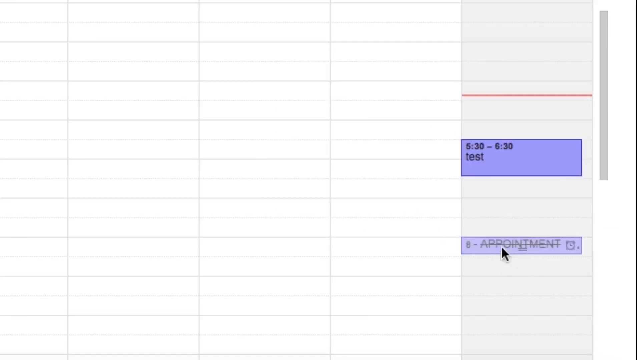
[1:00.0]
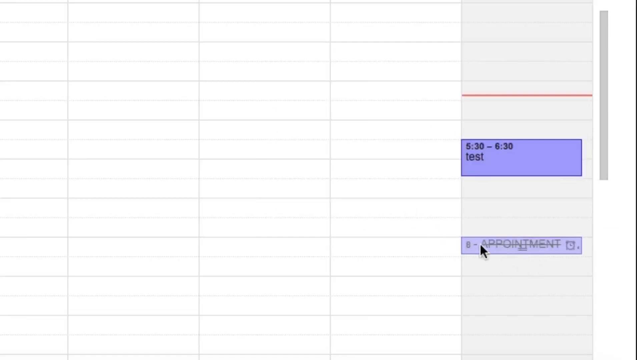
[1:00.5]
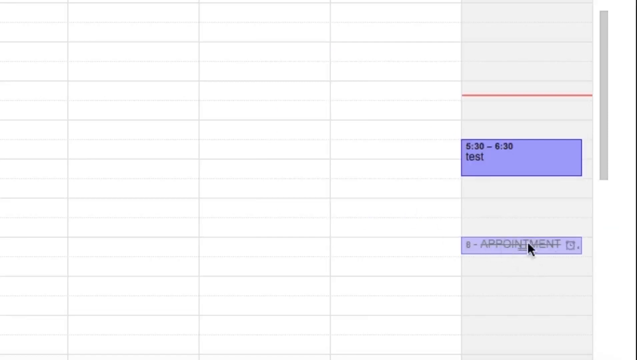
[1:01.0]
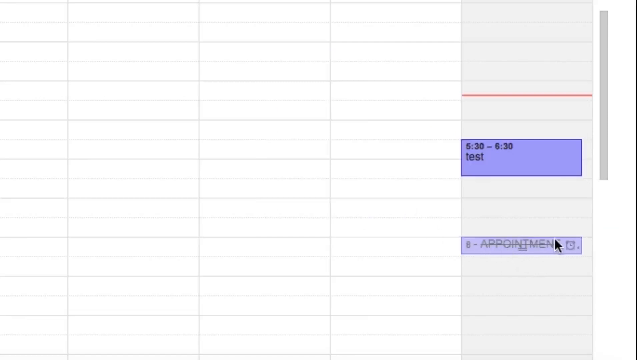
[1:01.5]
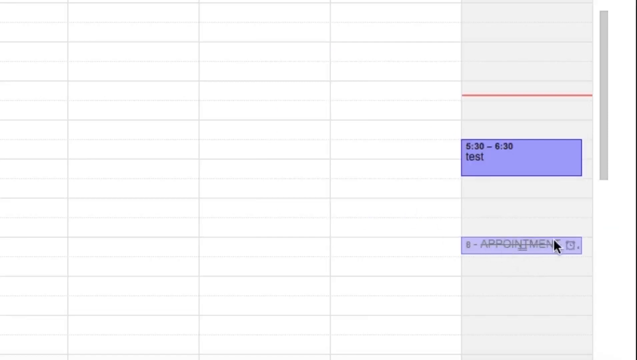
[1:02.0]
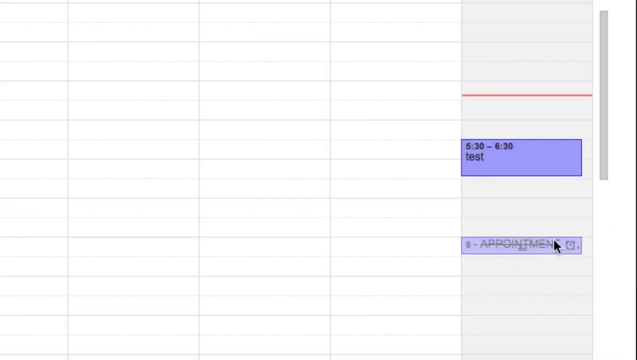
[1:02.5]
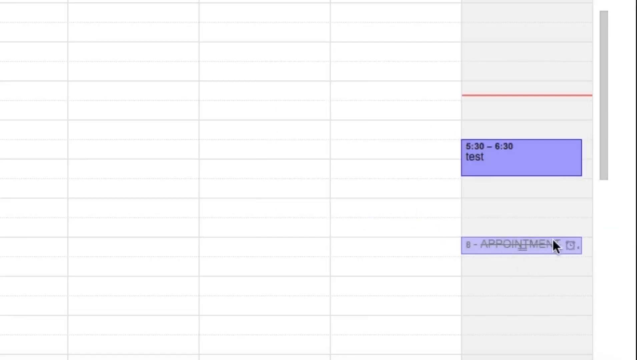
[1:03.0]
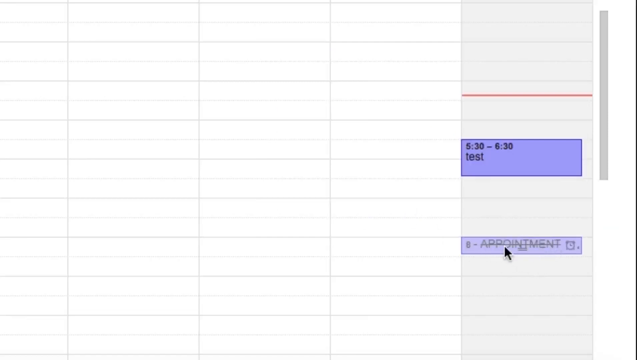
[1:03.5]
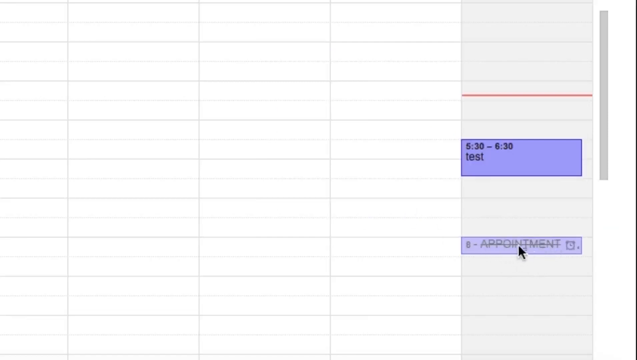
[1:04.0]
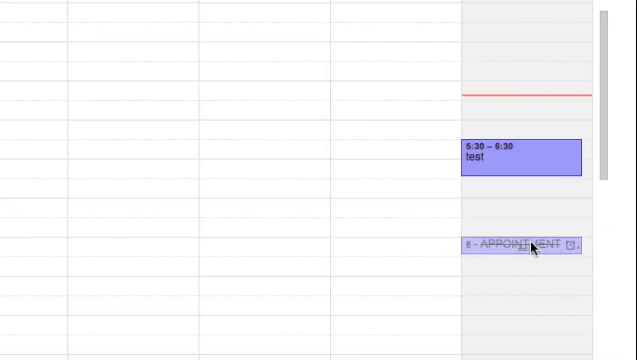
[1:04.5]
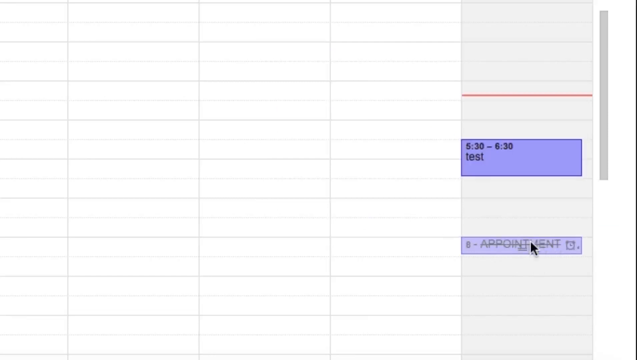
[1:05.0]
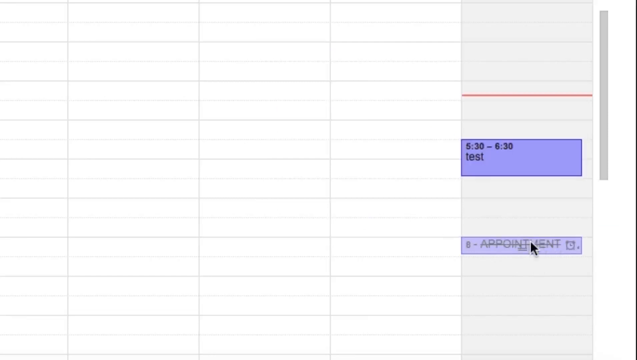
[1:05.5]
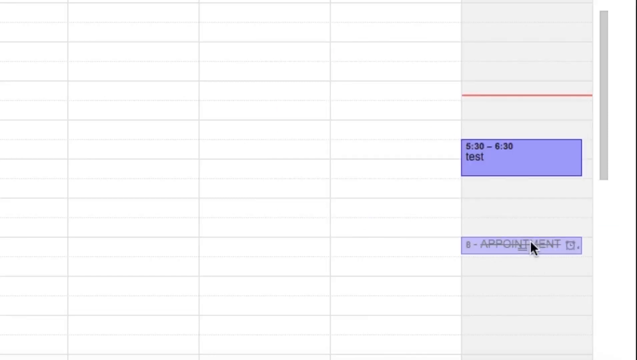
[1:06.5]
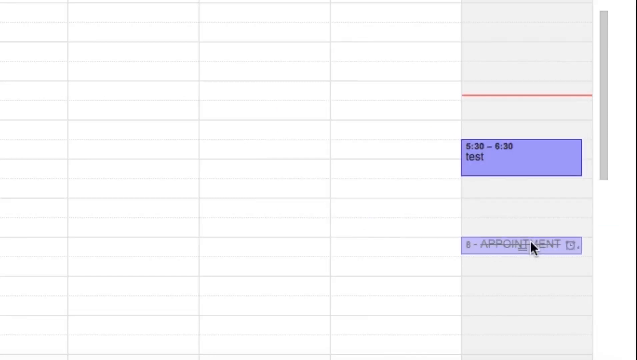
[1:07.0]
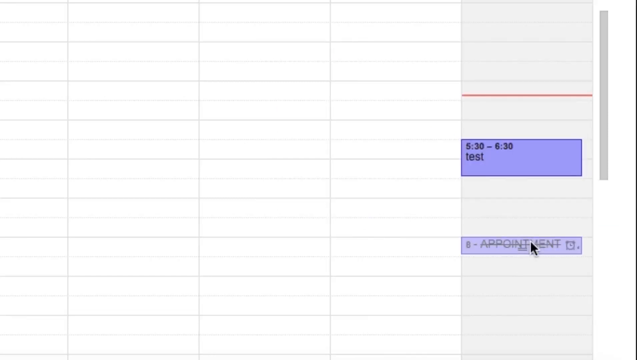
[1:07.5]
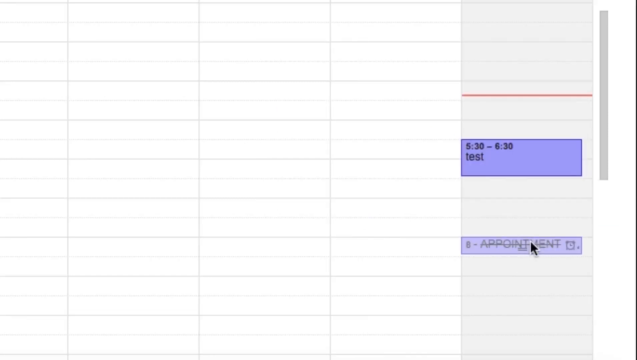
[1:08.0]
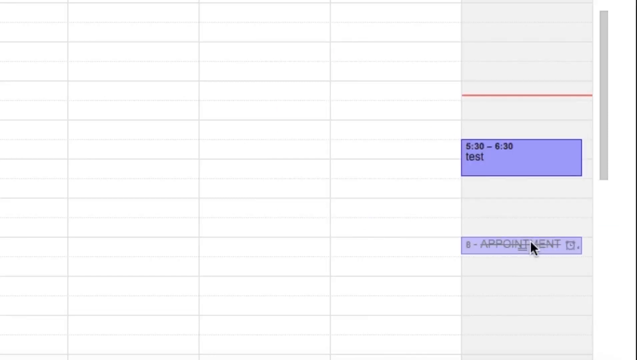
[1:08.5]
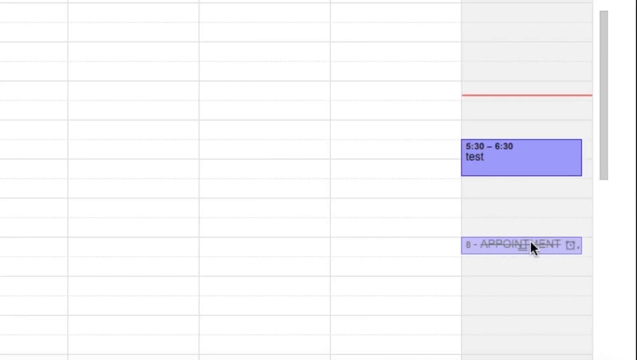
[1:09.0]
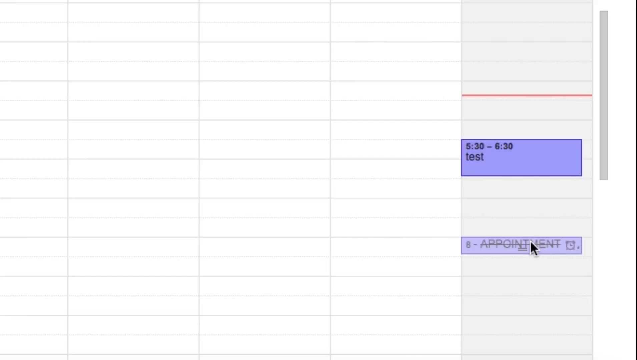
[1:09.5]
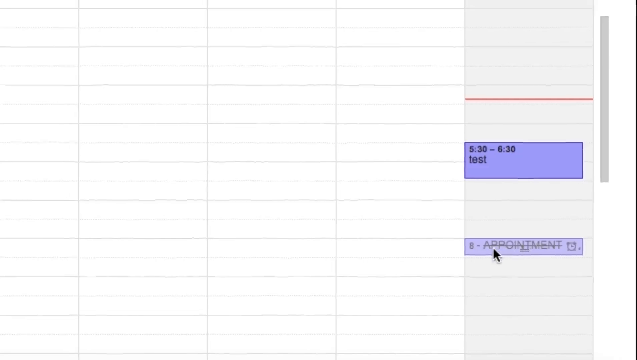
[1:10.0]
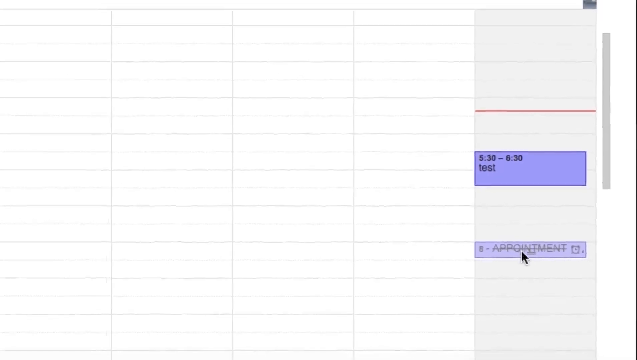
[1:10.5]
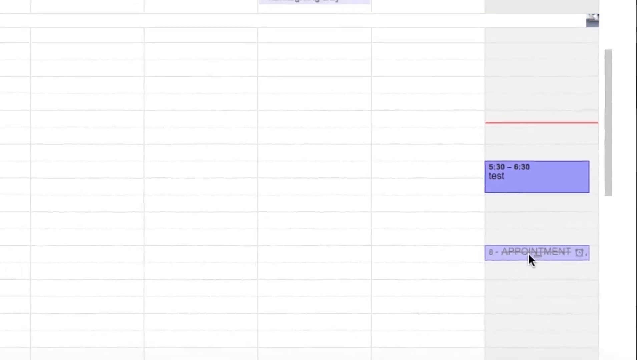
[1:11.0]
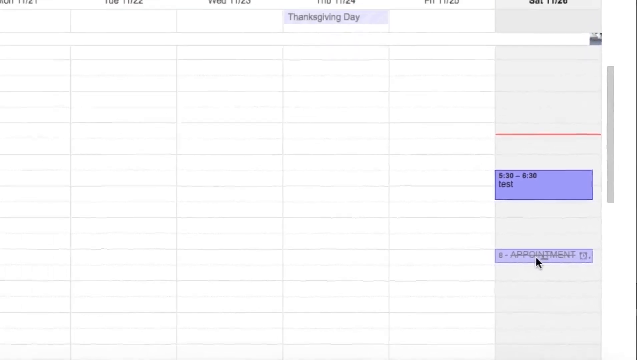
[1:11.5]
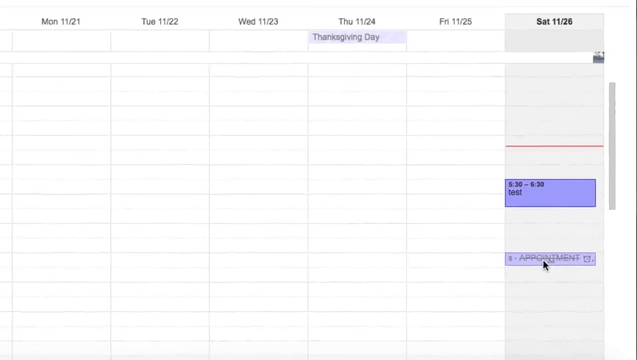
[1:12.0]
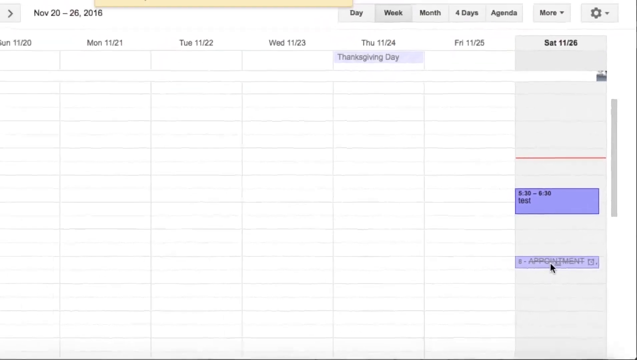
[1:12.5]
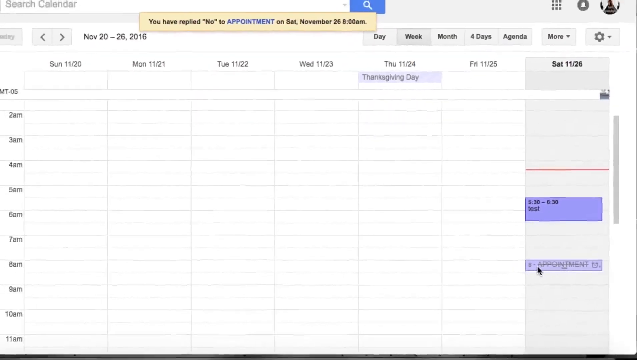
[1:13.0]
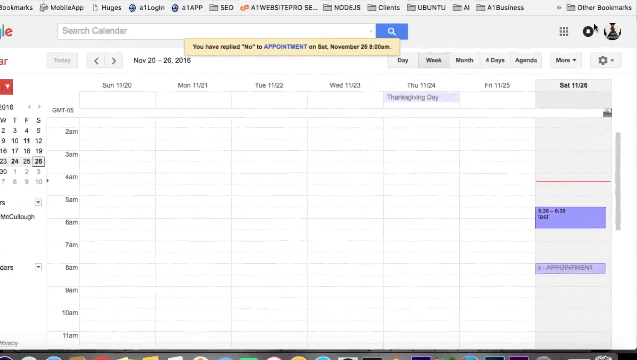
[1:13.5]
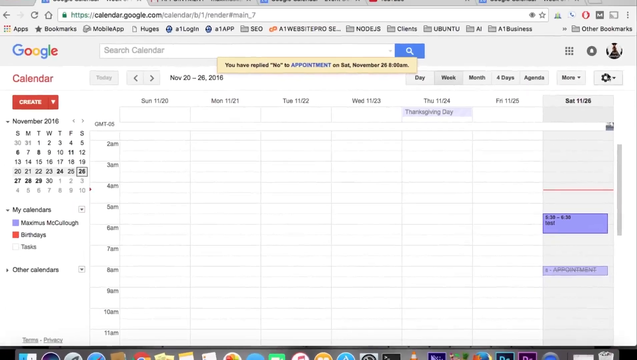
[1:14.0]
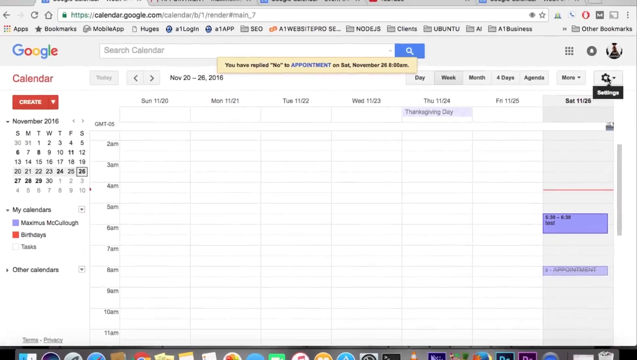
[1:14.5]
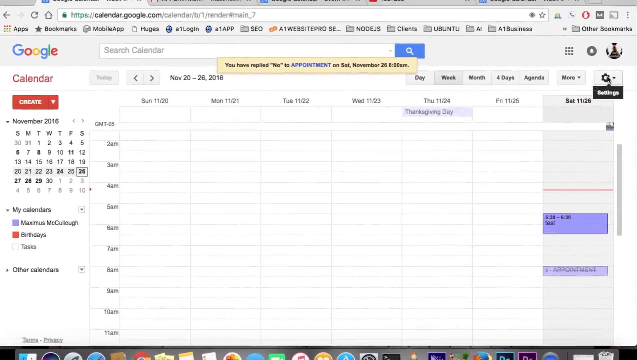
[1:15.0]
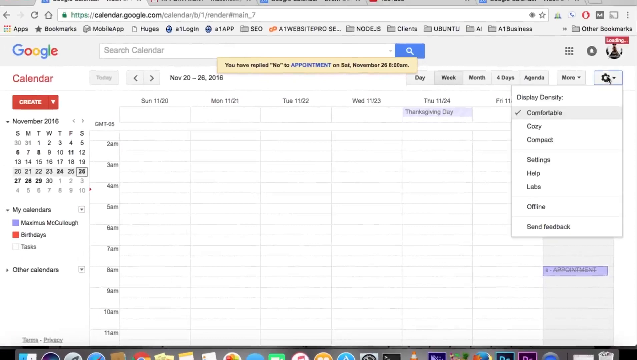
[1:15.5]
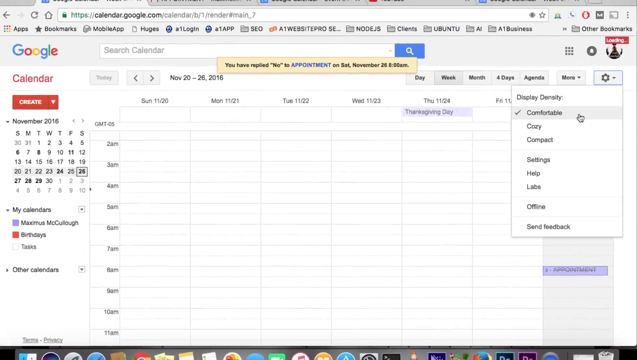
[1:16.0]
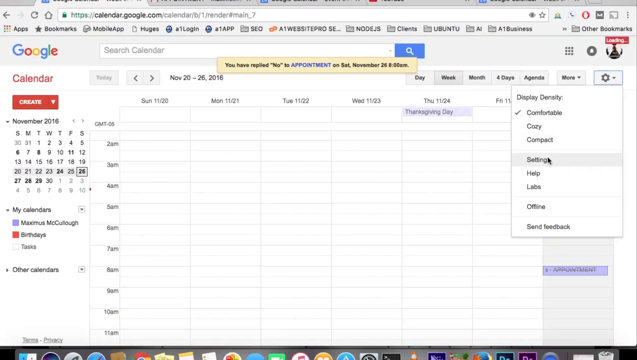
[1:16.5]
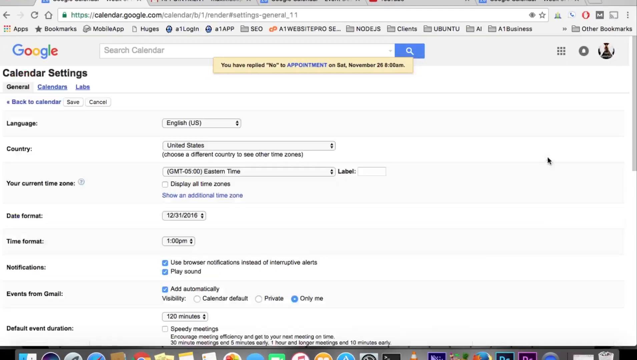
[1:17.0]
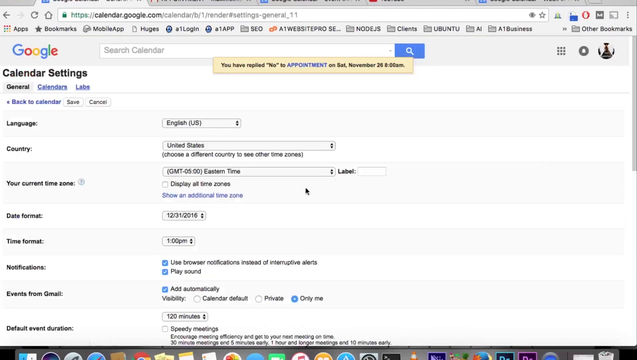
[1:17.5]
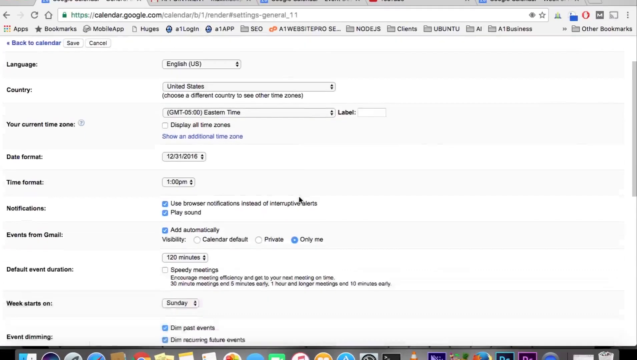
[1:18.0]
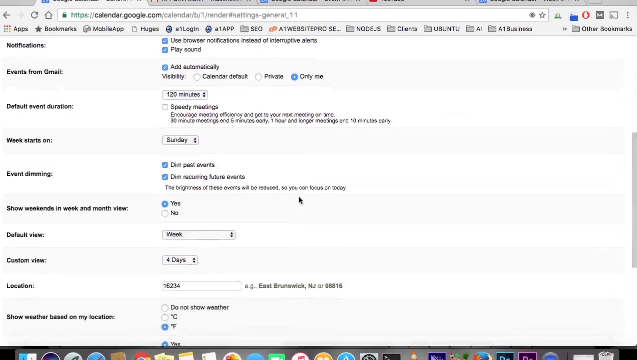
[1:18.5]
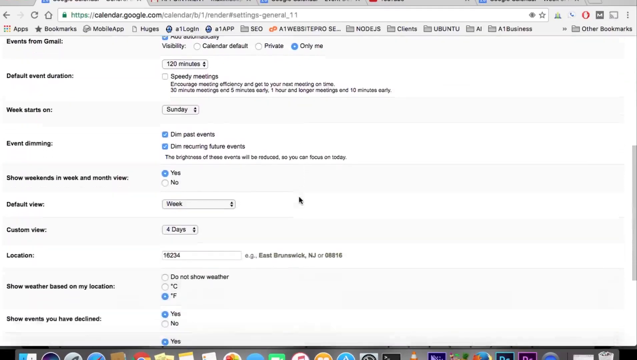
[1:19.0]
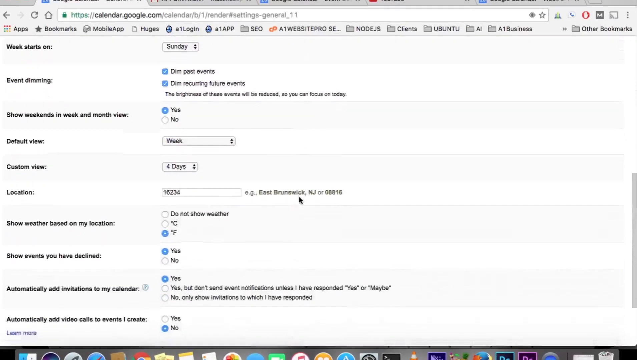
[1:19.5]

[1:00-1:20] A close-up of the Google Calendar shows a partial column on the left and three complete columns on the right. The active column on the right is Saturday, which contains a notification for a test between 5:30 and 6:30 and, below it, an appointment at 8 o'clock. The word "appointment" has a line drawn through it, and the mouse is positioned on it. The mouse moves along the horizontal line through "appointment", pointing out that the appointment has been canceled. The view then pulls back to a larger overview of the original screen, and the mouse moves through several other places on the Google Calendar screen before the view returns to the still picture with the Saturday column highlighted, where the word "appointment" at the bottom of the column has a line through it as if canceled.